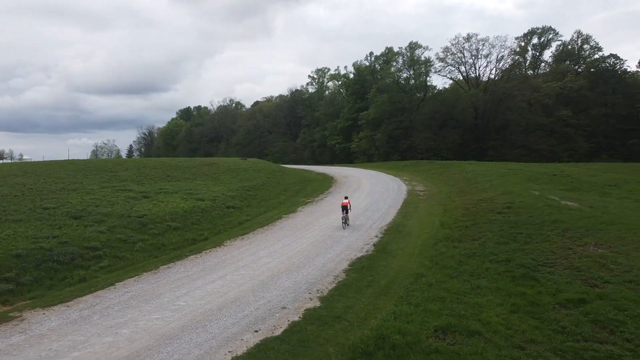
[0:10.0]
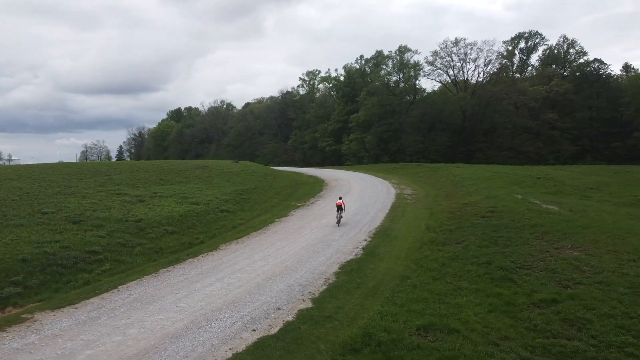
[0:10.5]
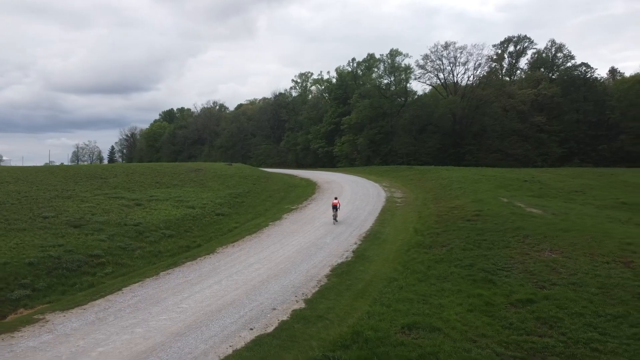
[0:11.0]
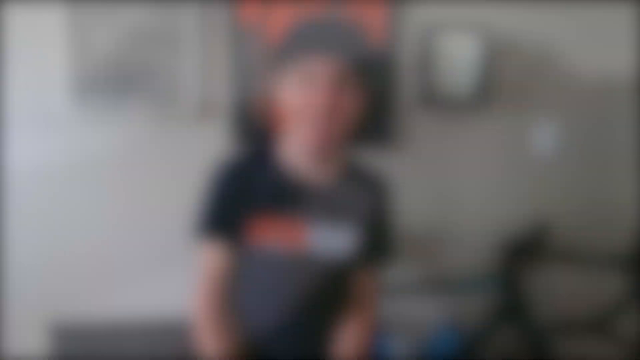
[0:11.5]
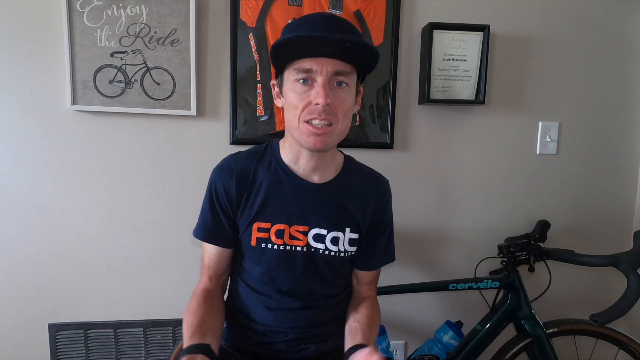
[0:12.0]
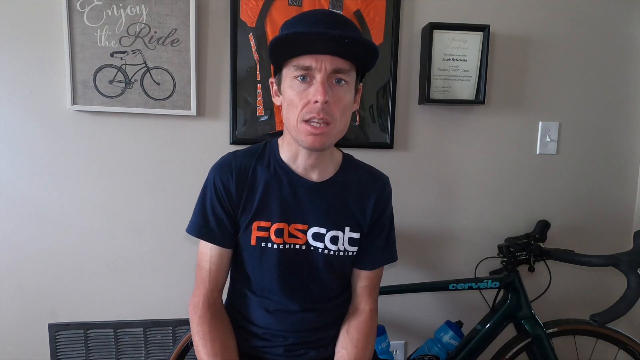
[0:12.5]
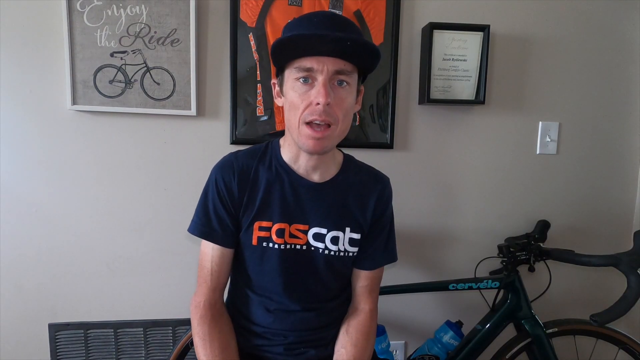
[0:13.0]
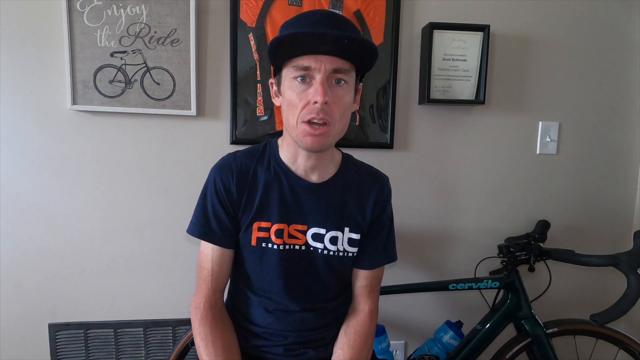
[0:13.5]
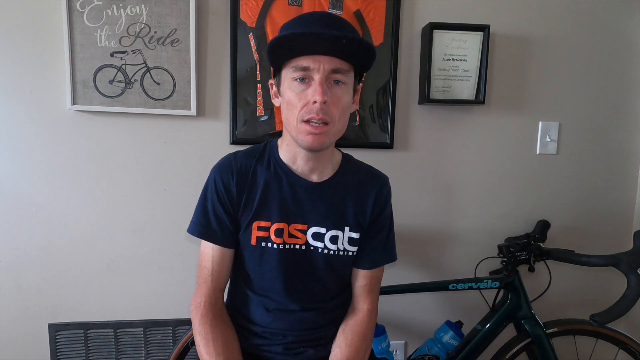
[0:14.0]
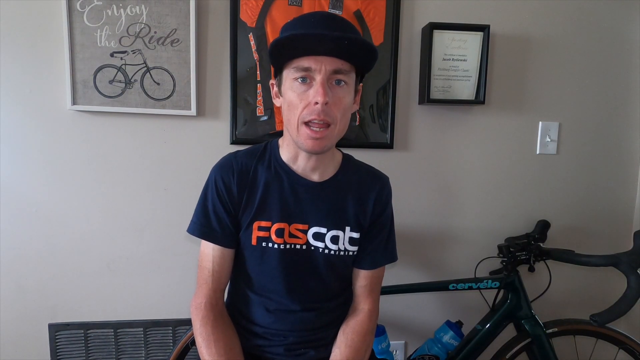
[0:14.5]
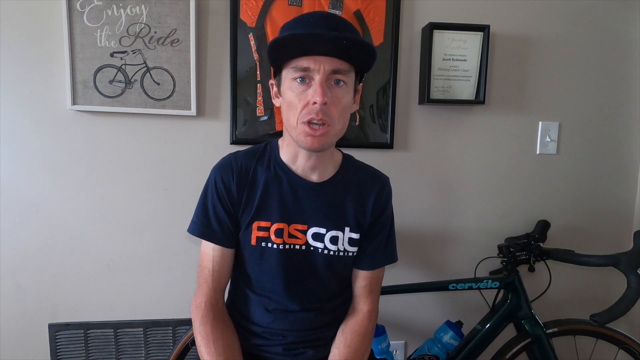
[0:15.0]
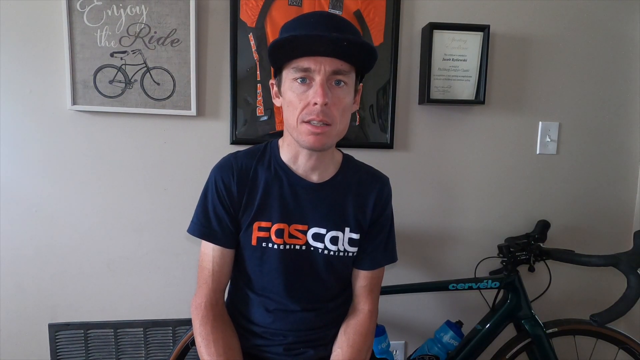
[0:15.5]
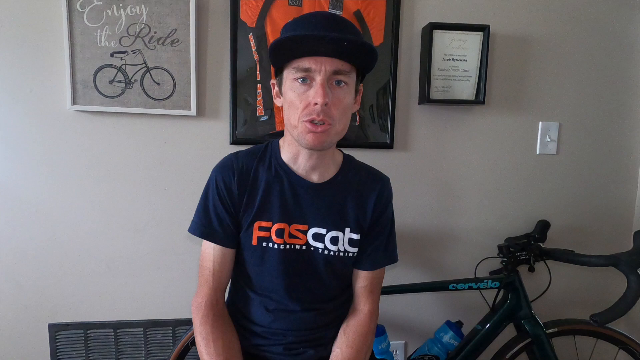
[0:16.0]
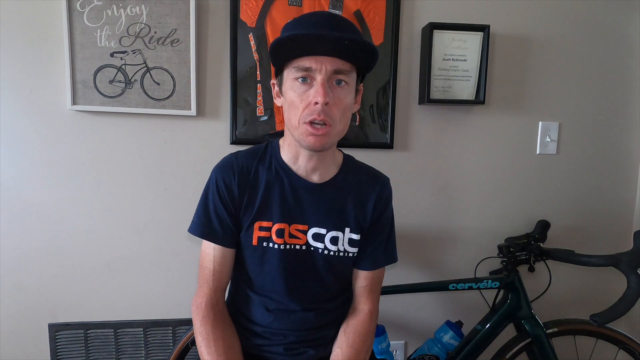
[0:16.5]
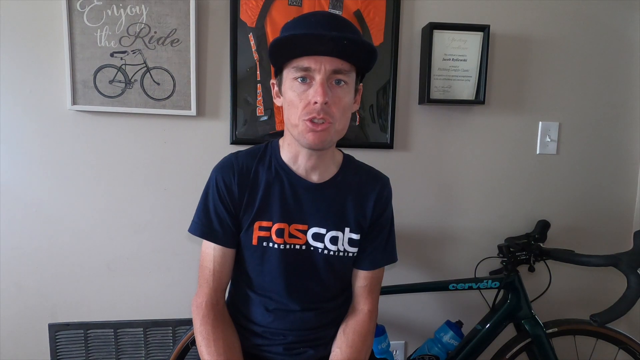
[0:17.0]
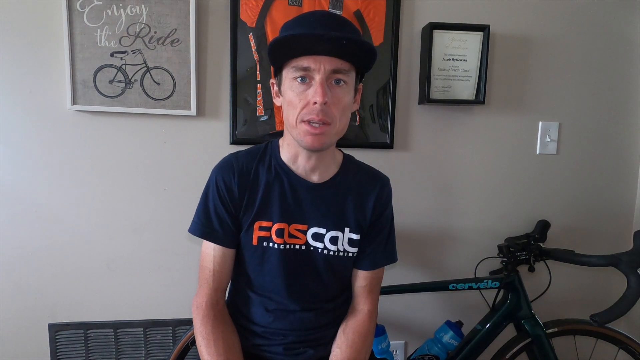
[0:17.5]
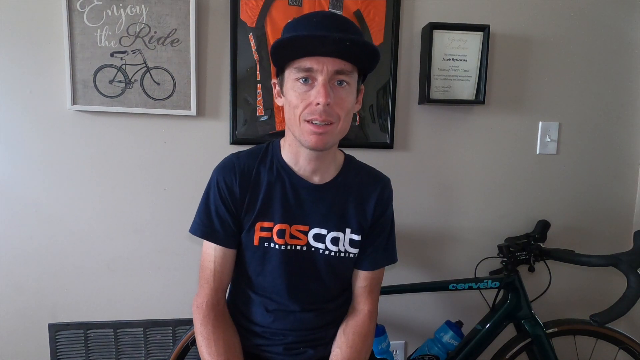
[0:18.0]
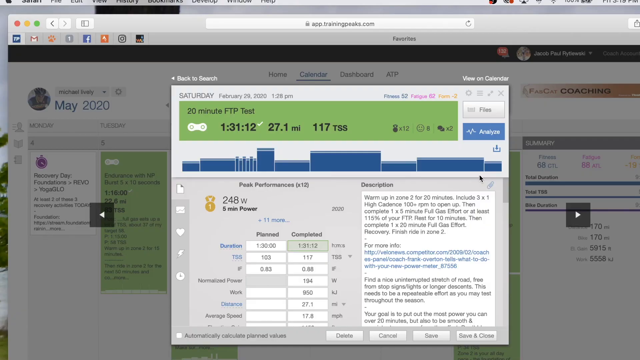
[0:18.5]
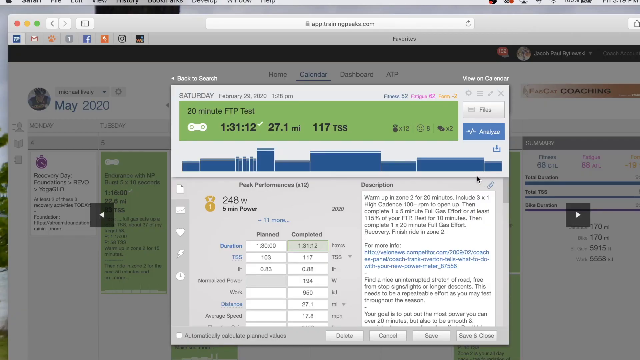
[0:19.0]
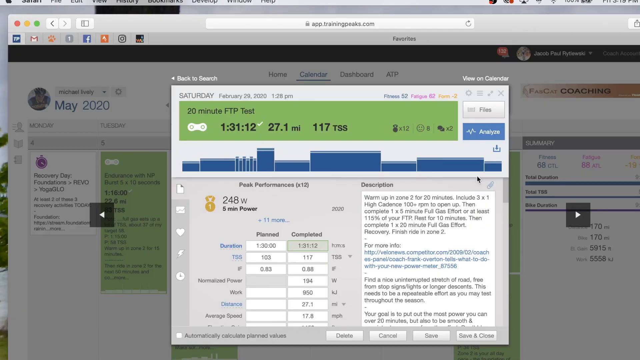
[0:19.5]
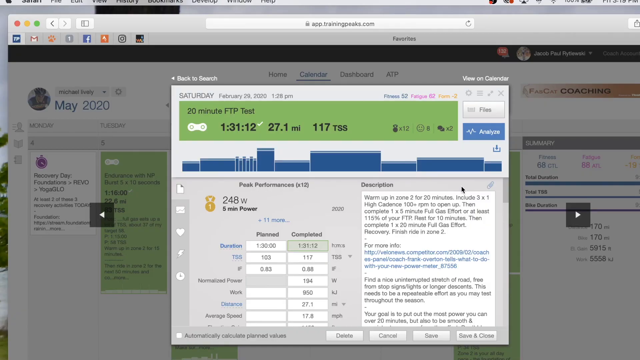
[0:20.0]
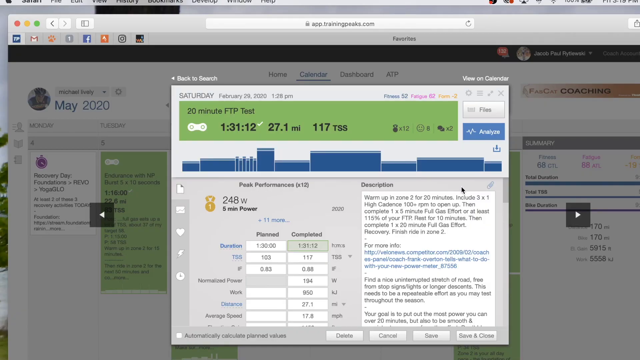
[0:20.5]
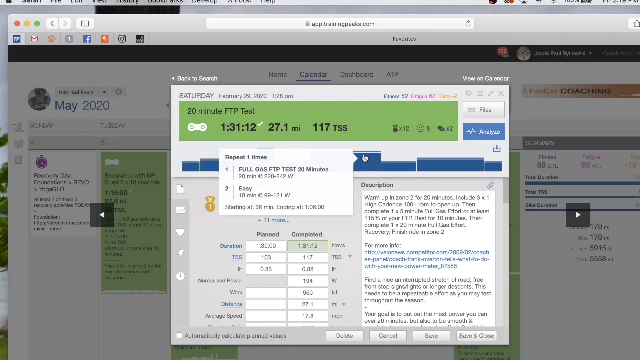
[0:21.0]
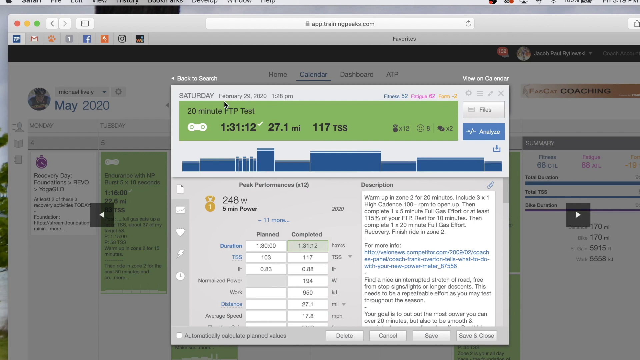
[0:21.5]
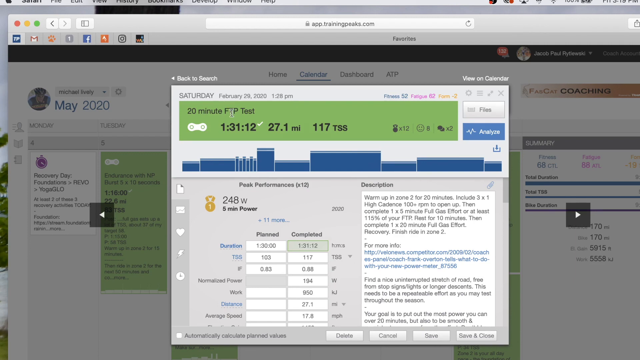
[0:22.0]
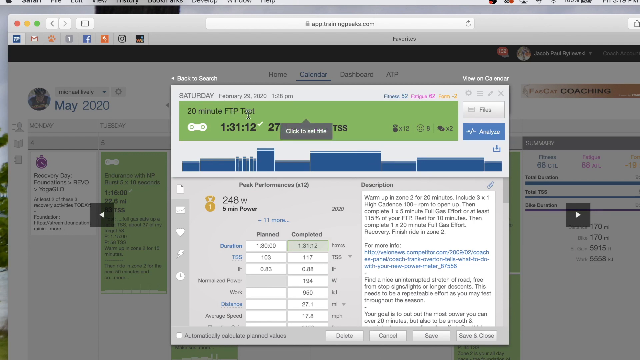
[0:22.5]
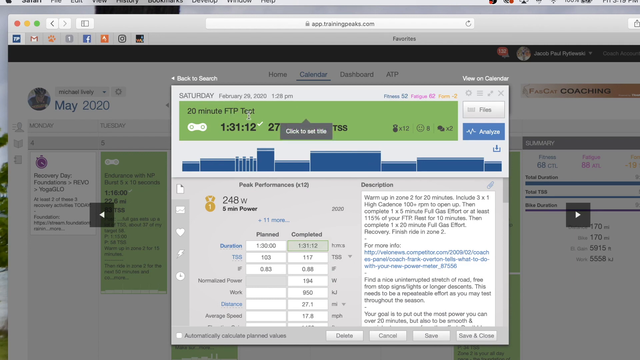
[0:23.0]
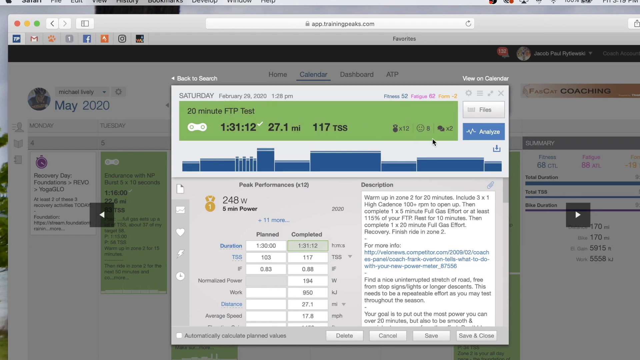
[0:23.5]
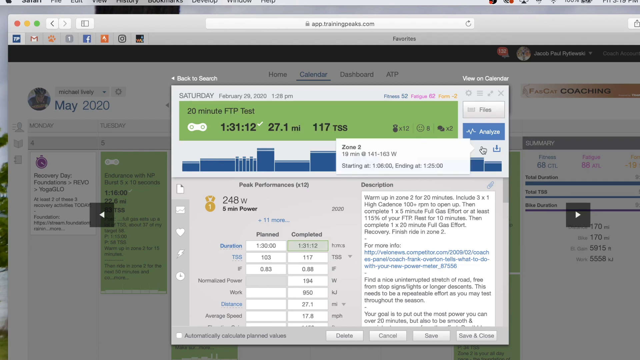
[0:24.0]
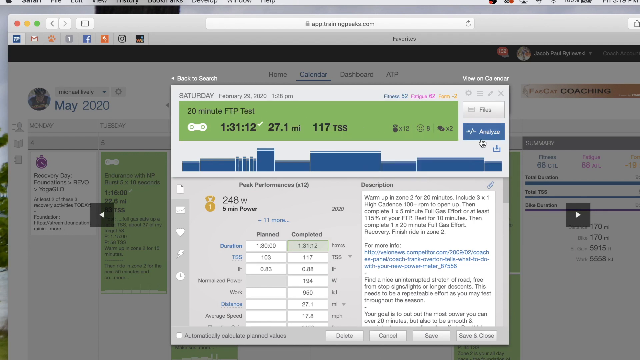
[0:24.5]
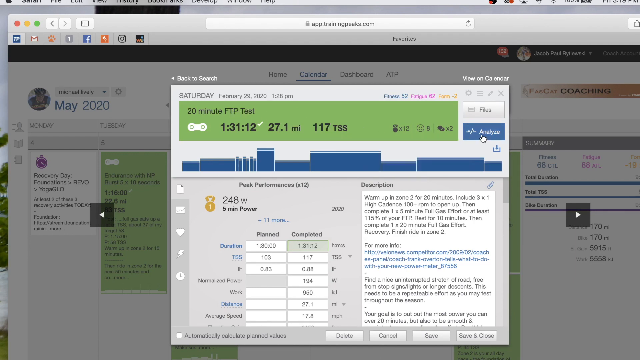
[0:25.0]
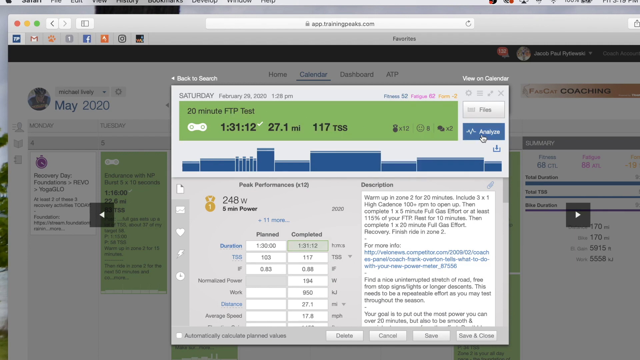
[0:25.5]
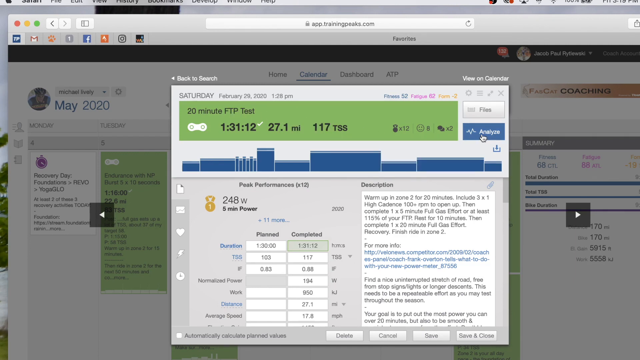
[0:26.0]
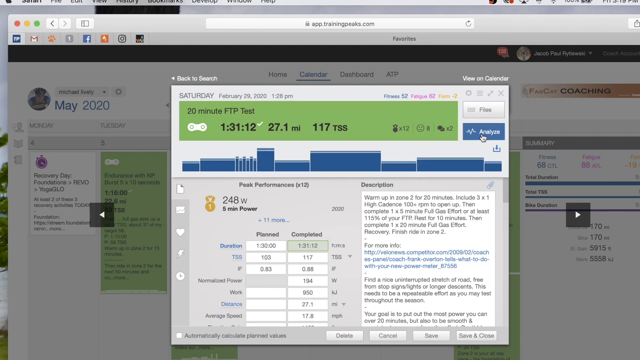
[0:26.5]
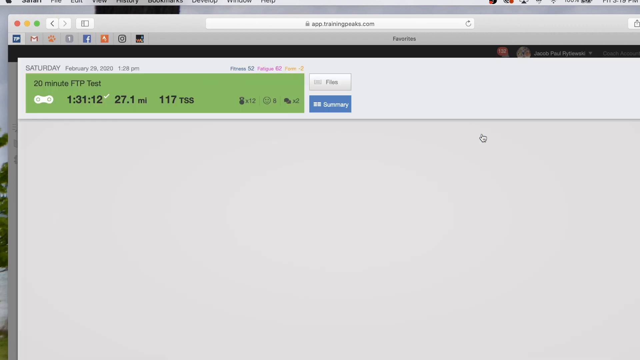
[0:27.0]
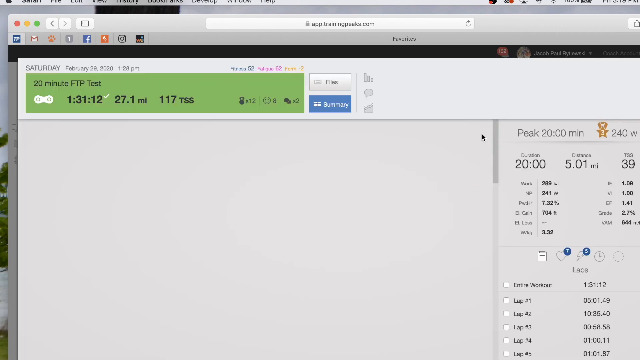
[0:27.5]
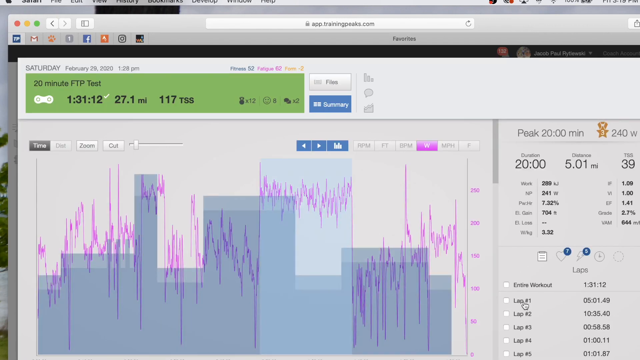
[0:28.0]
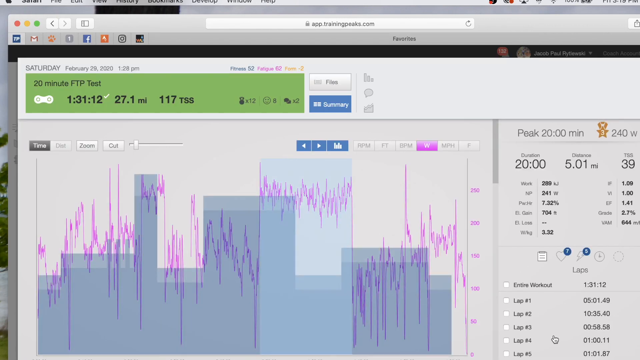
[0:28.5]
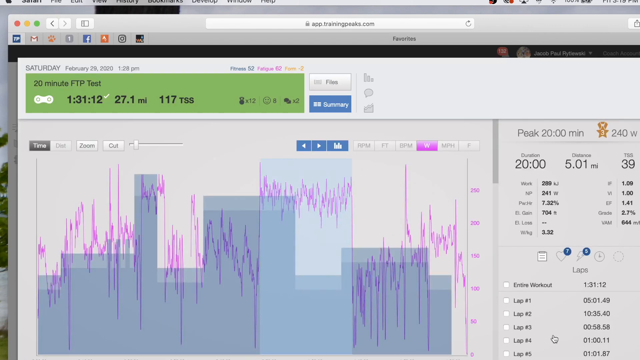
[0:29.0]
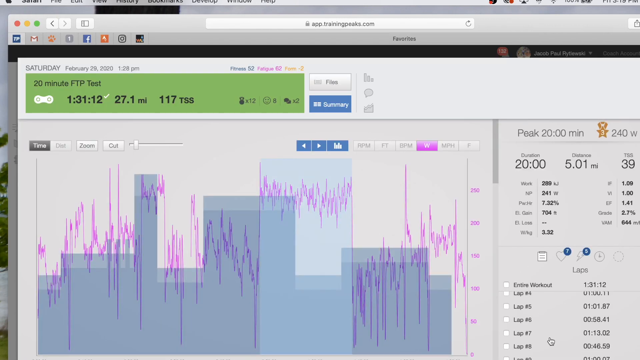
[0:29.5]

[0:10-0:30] The man on the bicycle keeps going down the road as the camera slowly pans out, then the video fades to a room with a white wall. At the top left is a drawing of a bicycle facing to the right, with "enjoy the ride" written above it. Behind the person's head, which is in the center, is another item that looks like maybe an orange bicycle rider jersey. To the right, a small white document in a black border hangs on the wall, and there is a light switch behind the person. The top part of a bicycle, its handles, is just visible on the right side. The person wears a black hat, looks to be about 35, is very skinny, and their head is kind of big for their body. They wear a blue short-sleeve shirt with "FAScat" on it and "coaching and training" below that. They are clean-shaven and look at the camera fairly intently. The video then cuts to a computer screen with a pop-up in the center showing Saturday. Above the pop-up, the left side says "back to search" and the right side says "view your calendar". Below that, the top border reads "Saturday, February 29th, 2020, 128 PM". On the right side are more items, including "20-minute FTP test", with information below about the ride on Saturday. The cursor moves around, goes up to "analyze" and clicks it. A new view opens: at the top is still Saturday, February 29th, below it a green rectangle with "20-minute FTP test", and below that a bar graph with blue bars going up and down and purple lines zigzagging across it. The left side lists peak values and different times.